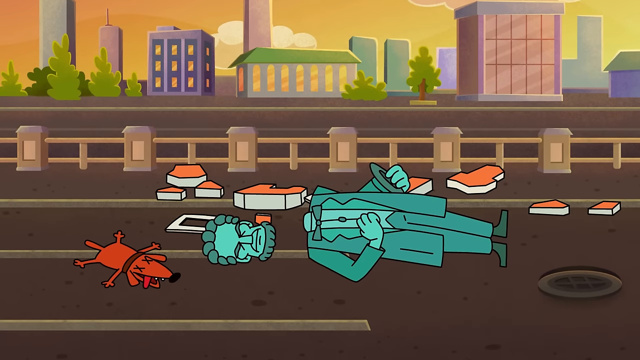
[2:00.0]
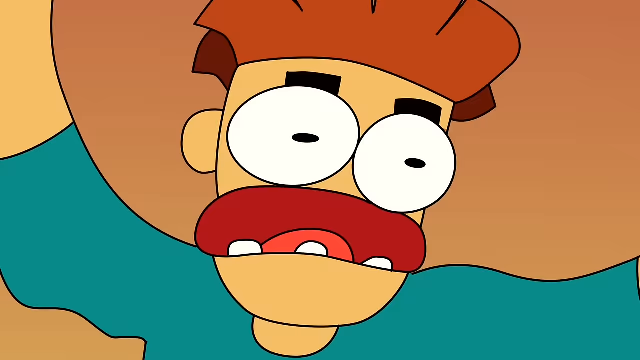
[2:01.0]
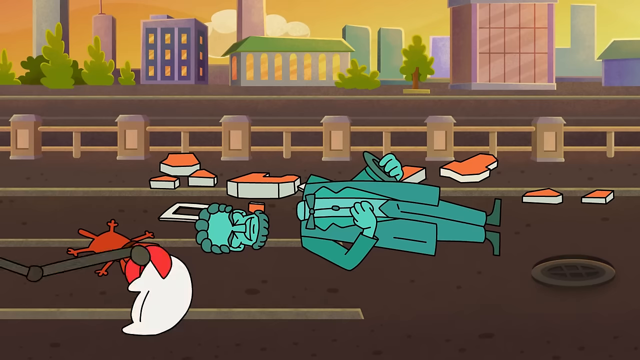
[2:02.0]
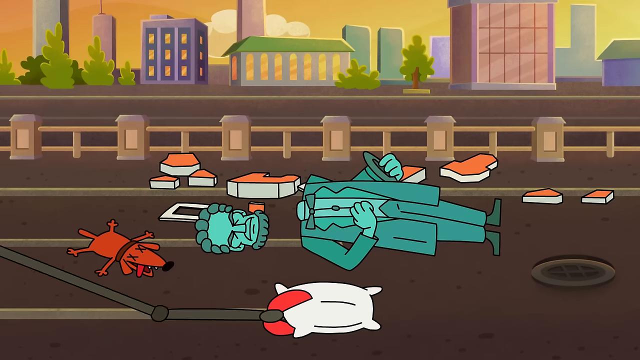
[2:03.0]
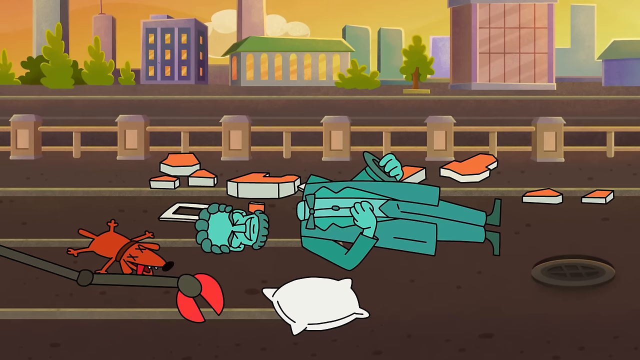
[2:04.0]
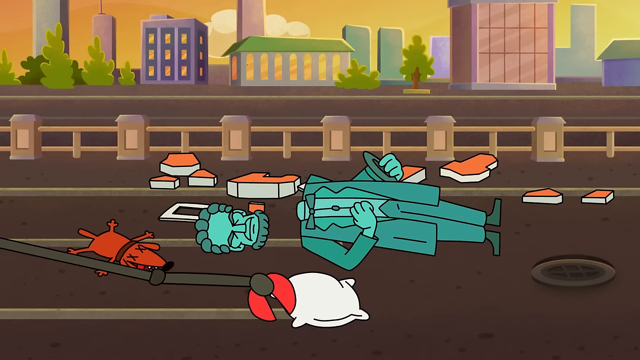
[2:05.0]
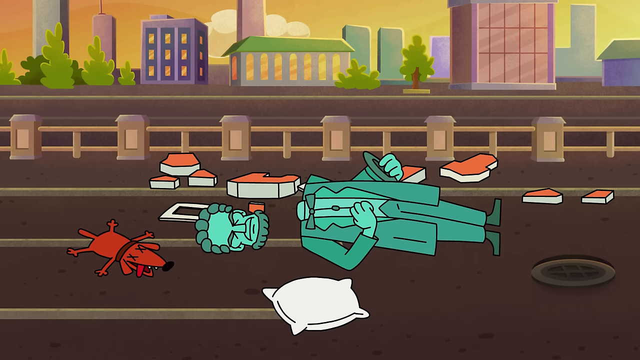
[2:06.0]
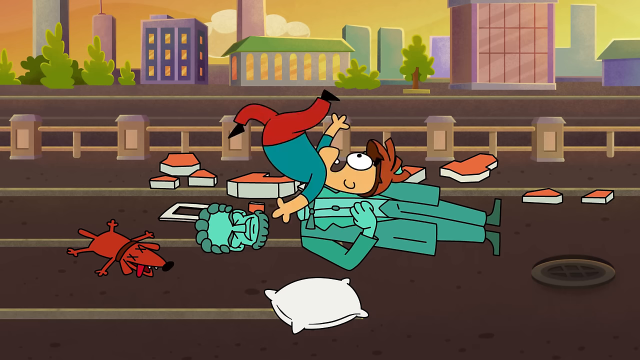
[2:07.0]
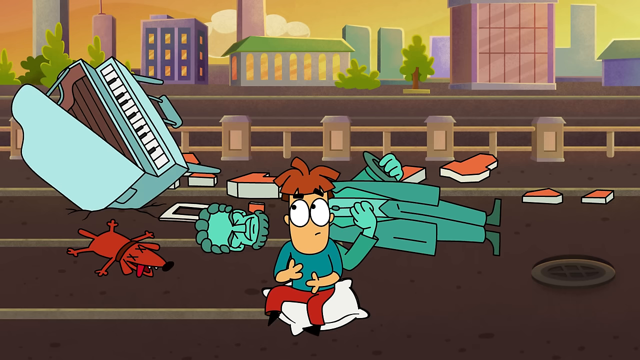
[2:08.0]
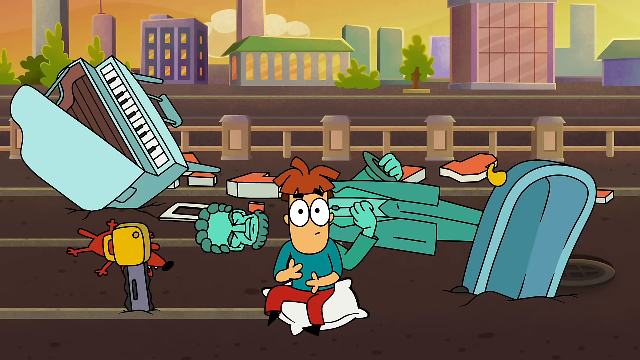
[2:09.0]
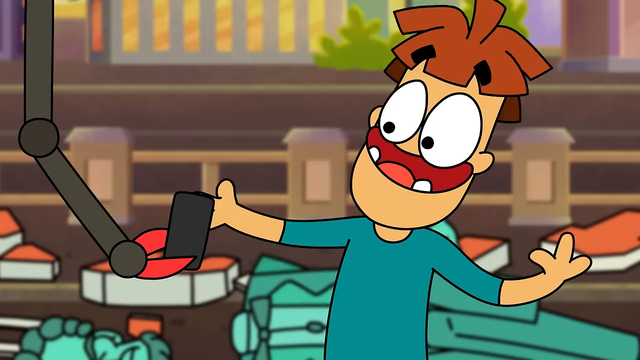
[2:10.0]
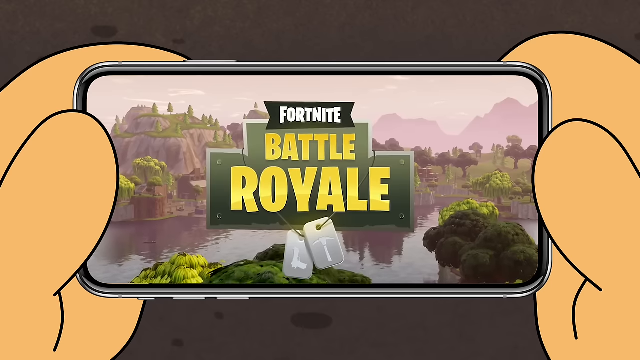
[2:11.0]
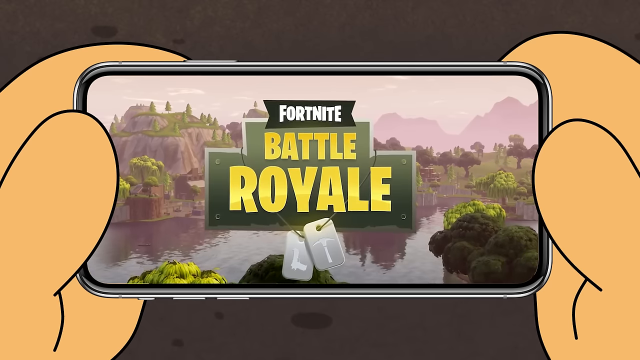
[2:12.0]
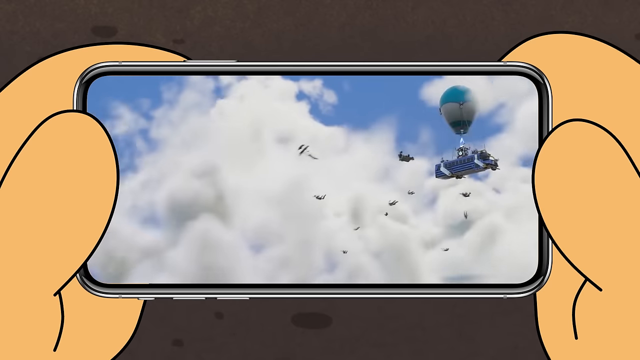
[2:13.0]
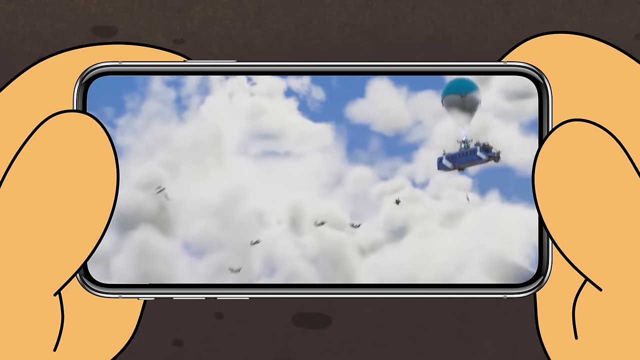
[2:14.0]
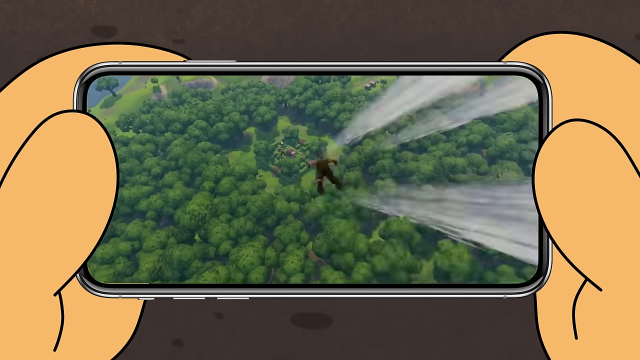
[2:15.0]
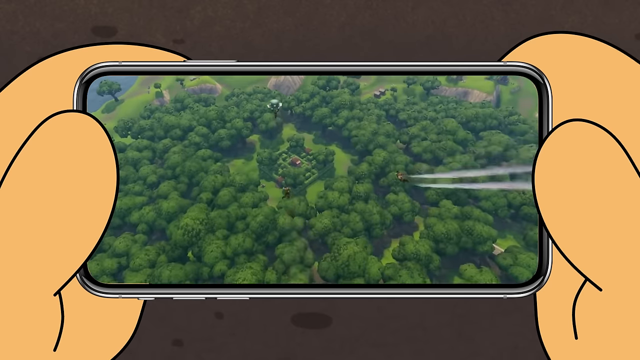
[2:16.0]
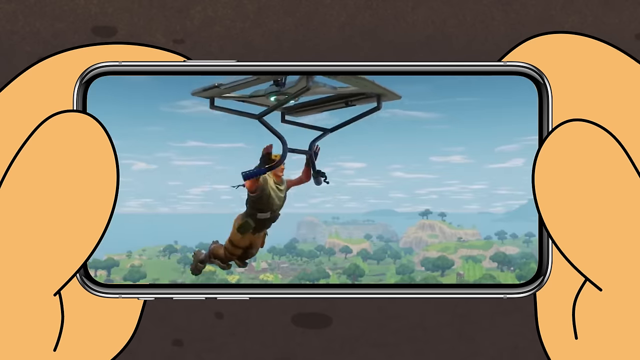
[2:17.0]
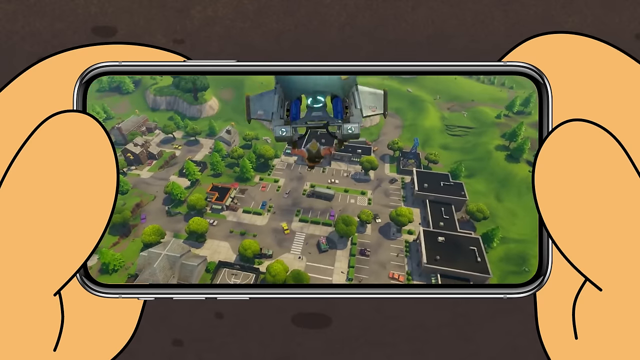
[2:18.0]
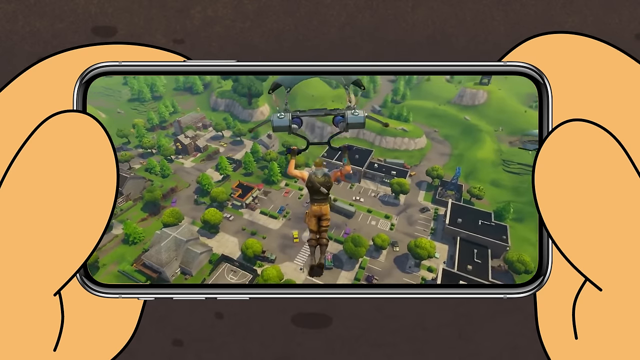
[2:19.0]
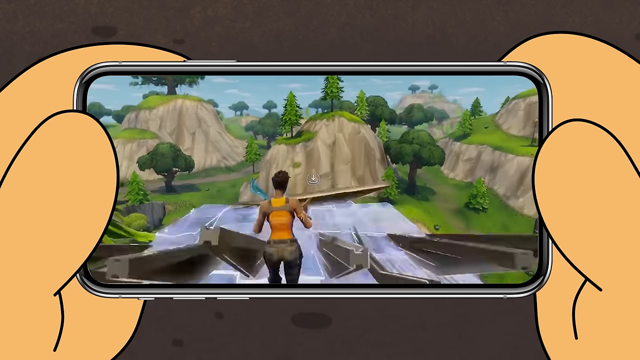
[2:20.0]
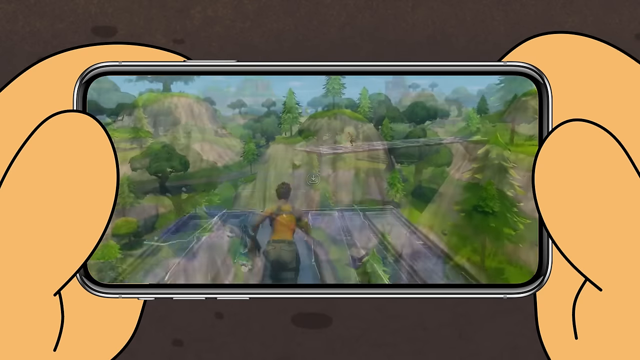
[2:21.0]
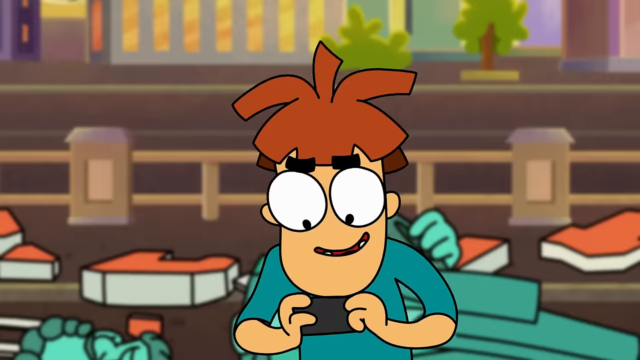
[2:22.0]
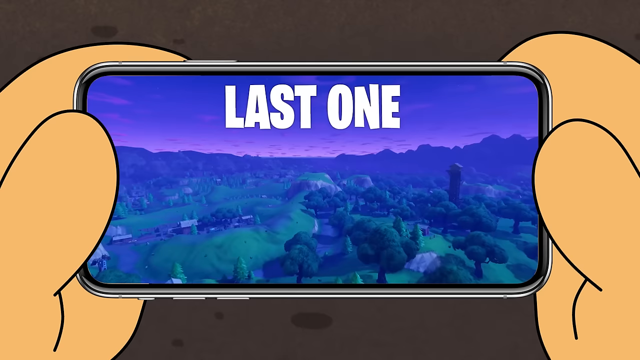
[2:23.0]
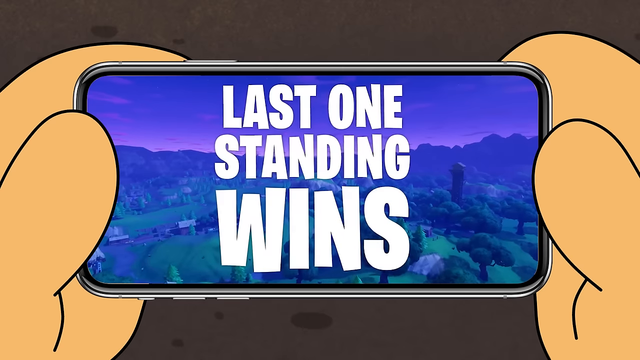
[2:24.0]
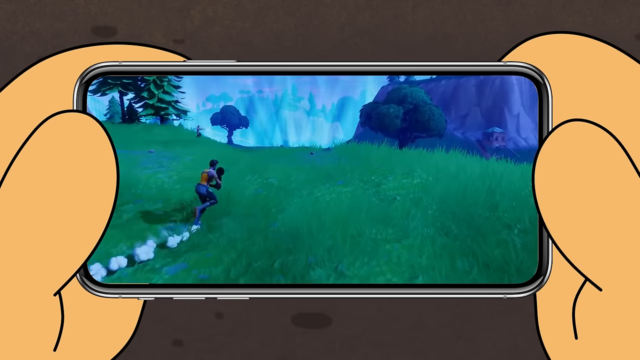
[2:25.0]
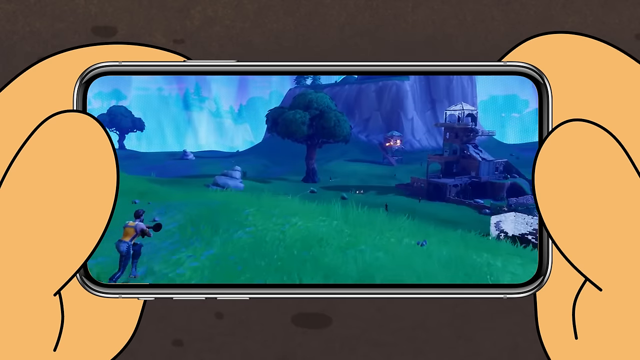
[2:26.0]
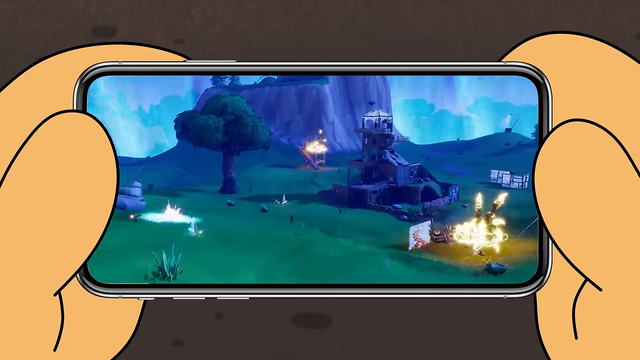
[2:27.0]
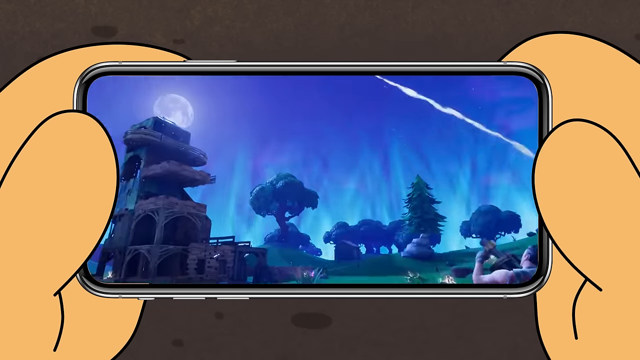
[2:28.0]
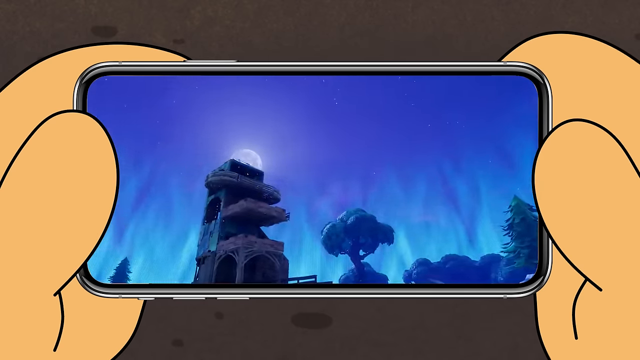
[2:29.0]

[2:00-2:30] A cartoonish scene appears to take place on a road, with tan guardrails or rails along the side and buildings of various sizes, shapes and colors in the far background. In the bottom left corner of the foreground is a reddish brown dog with a dark brown collar, a black nose and X's for eyes, making him look out or dead. To his right is a green statue that looks kind of like Abraham Lincoln, lying horizontally on the ground with its head detached from the body; it holds a top hat with its left hand against its body. A cartoonish man with brown hair, buggy eyes and a teal green shirt waves his hands and arms around. Some kind of mechanical arm sets a pillow down on the road, and the brown-haired character falls and lands on it, as if the arm placed the pillow in his path to break his fall. The piano hits the ground on the left side of the screen and the bathtub hits the road on the right side, around the character. Then a chainsaw falls and hits the ground to his left.